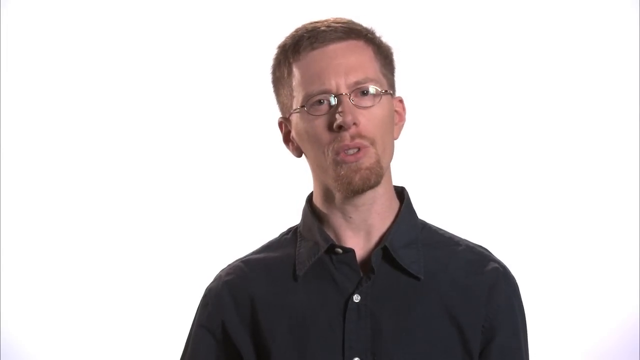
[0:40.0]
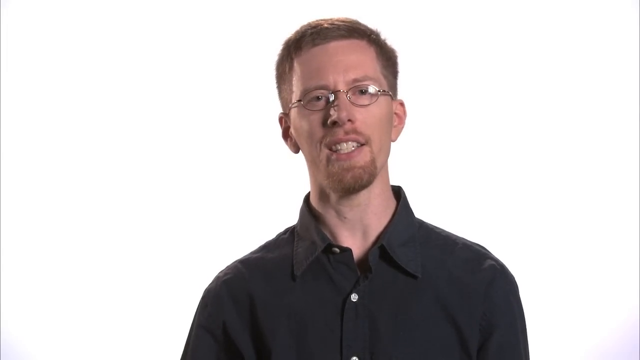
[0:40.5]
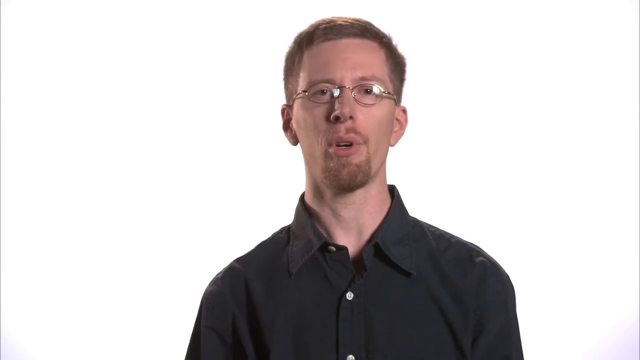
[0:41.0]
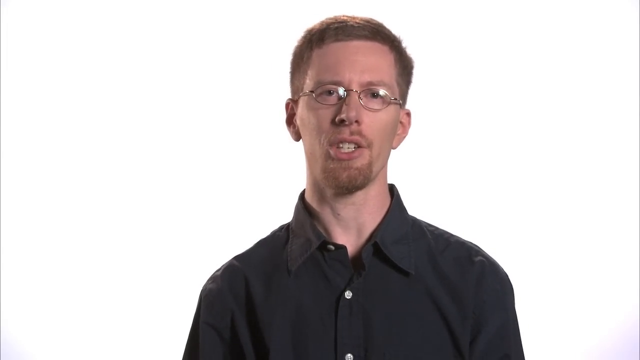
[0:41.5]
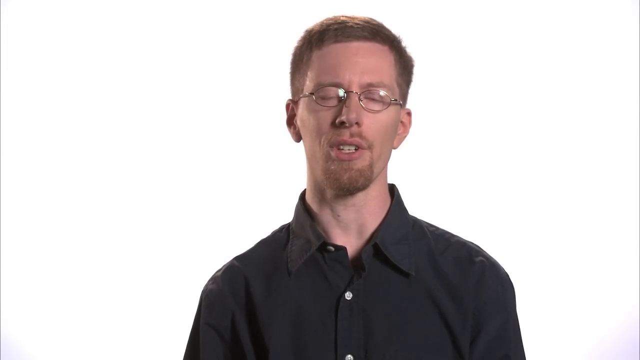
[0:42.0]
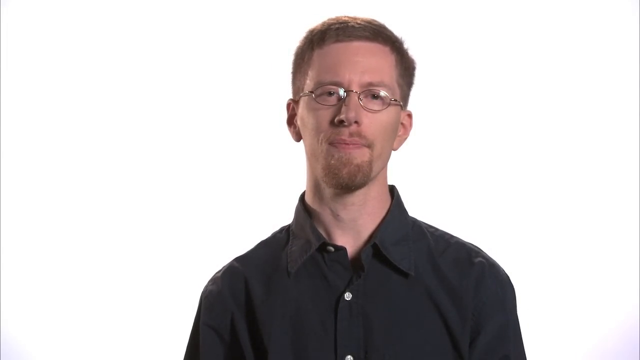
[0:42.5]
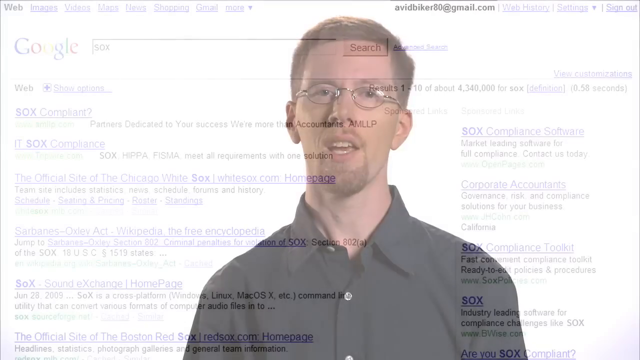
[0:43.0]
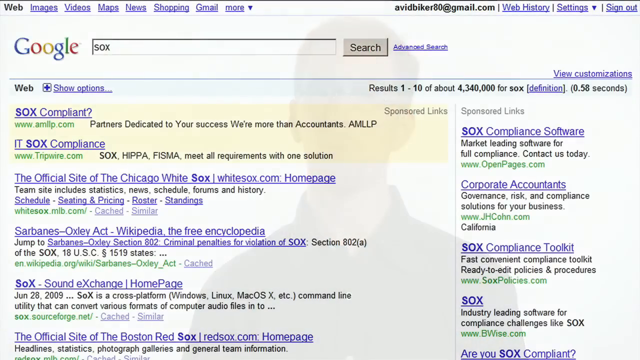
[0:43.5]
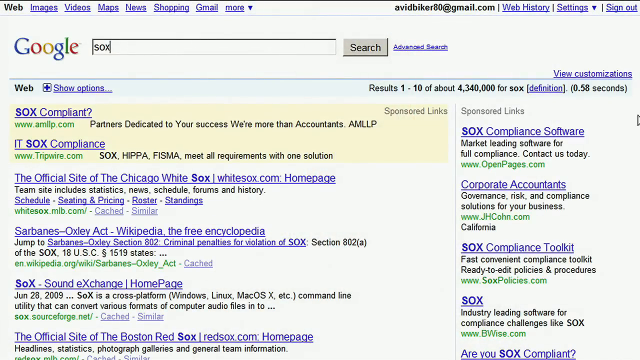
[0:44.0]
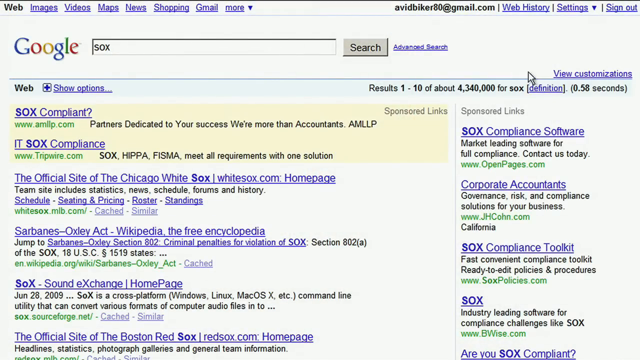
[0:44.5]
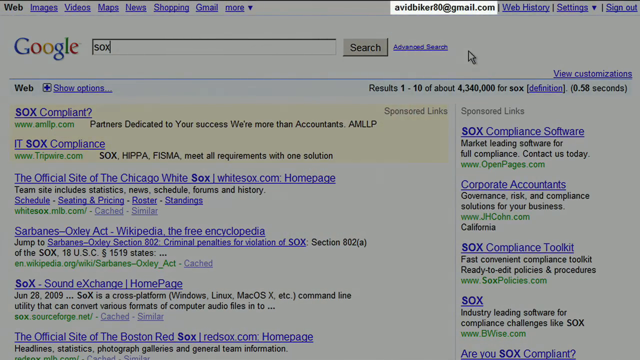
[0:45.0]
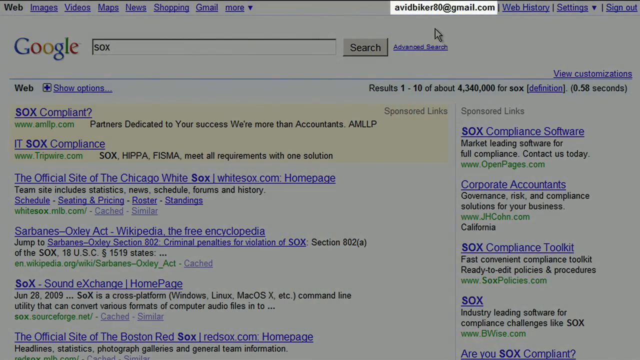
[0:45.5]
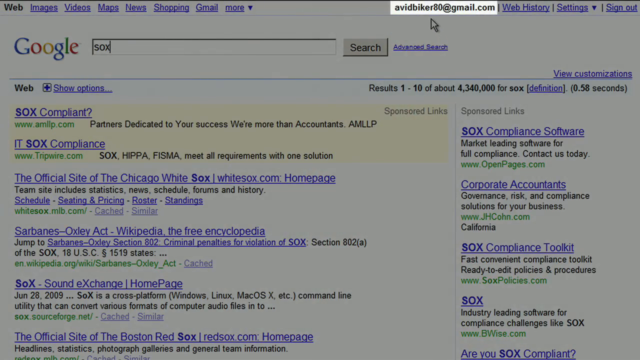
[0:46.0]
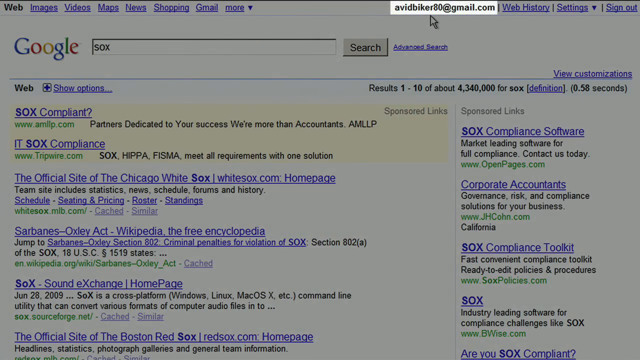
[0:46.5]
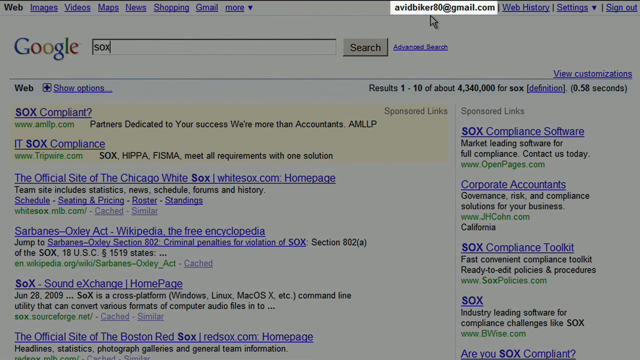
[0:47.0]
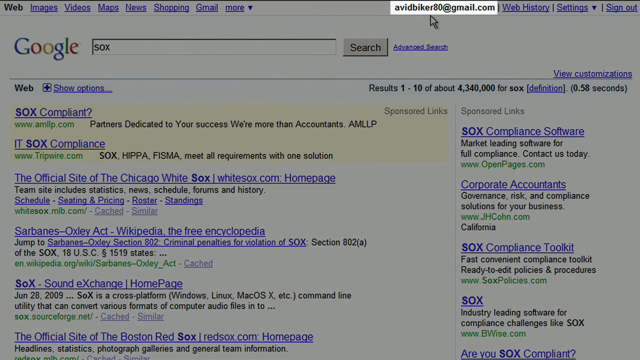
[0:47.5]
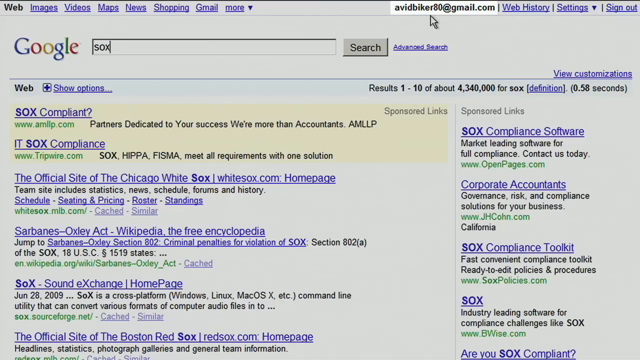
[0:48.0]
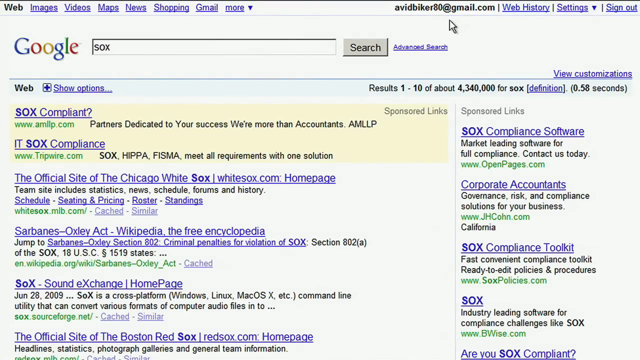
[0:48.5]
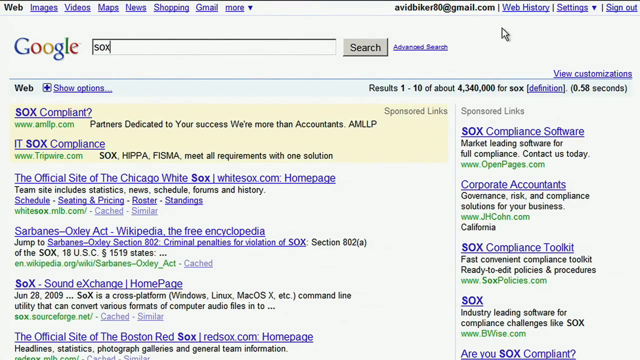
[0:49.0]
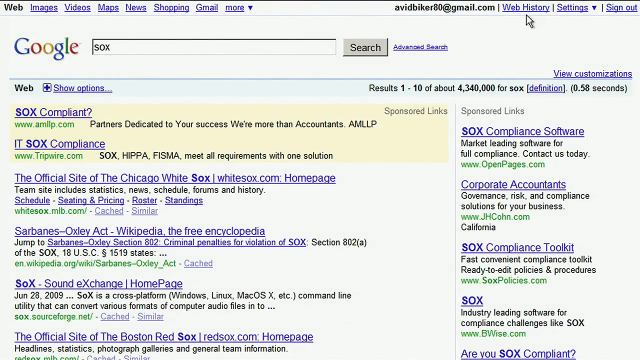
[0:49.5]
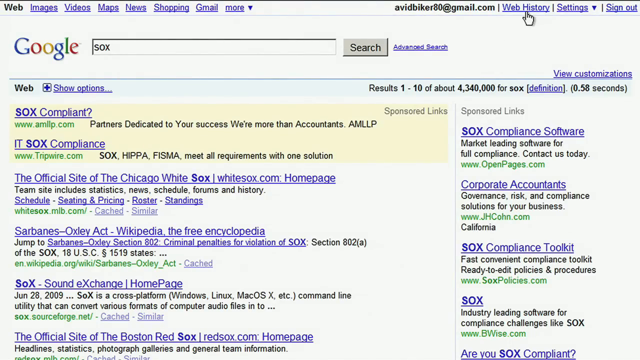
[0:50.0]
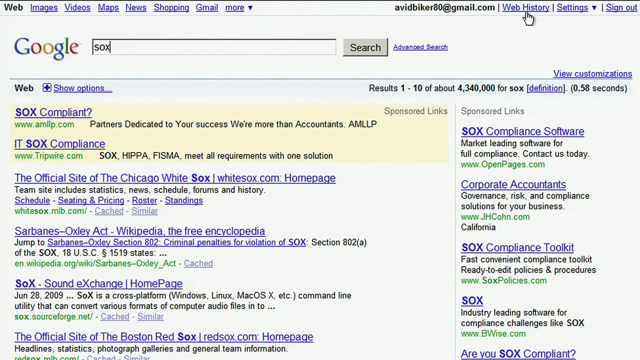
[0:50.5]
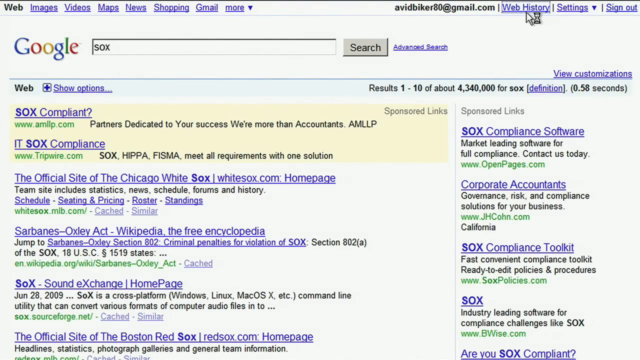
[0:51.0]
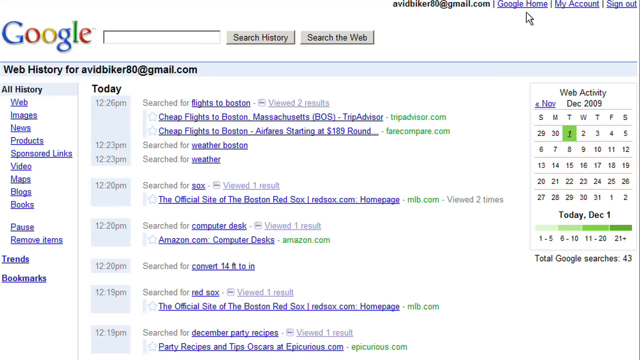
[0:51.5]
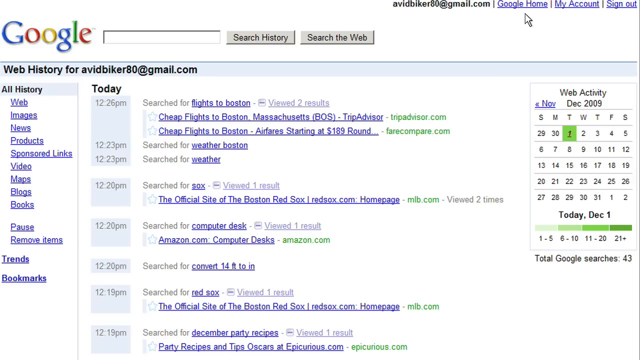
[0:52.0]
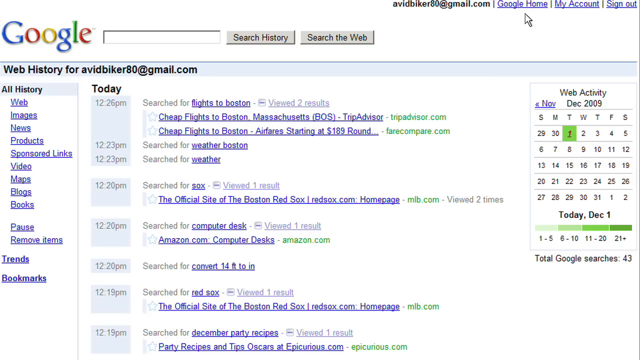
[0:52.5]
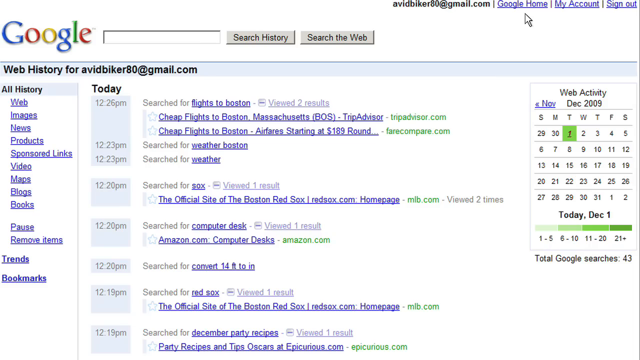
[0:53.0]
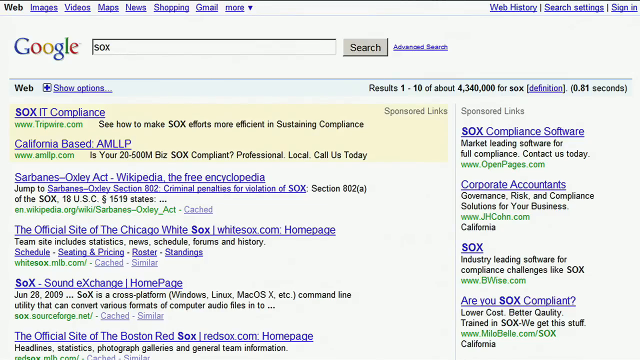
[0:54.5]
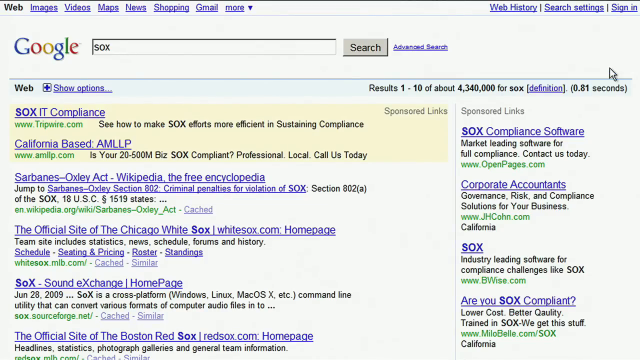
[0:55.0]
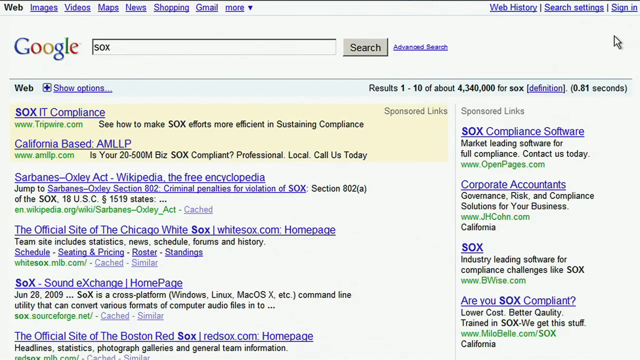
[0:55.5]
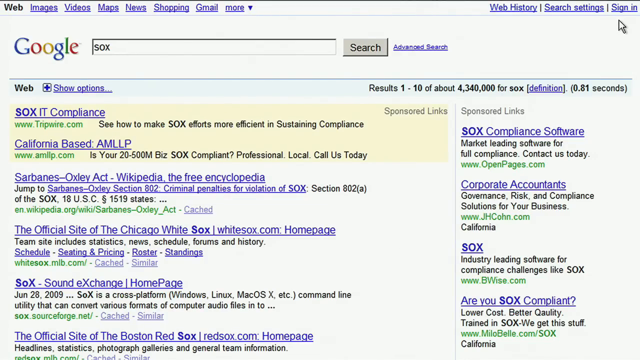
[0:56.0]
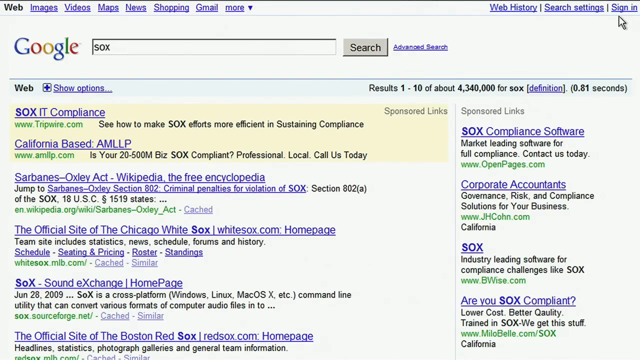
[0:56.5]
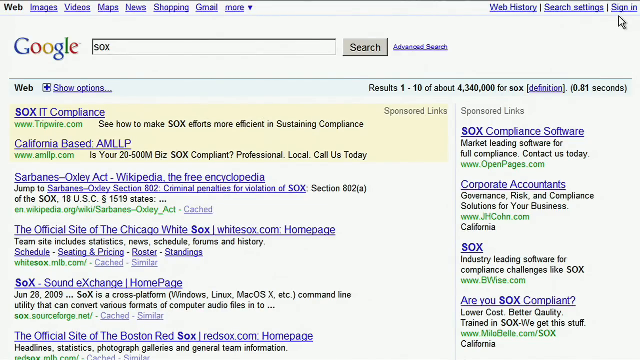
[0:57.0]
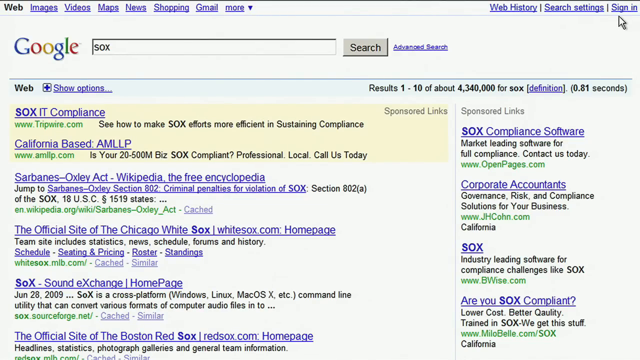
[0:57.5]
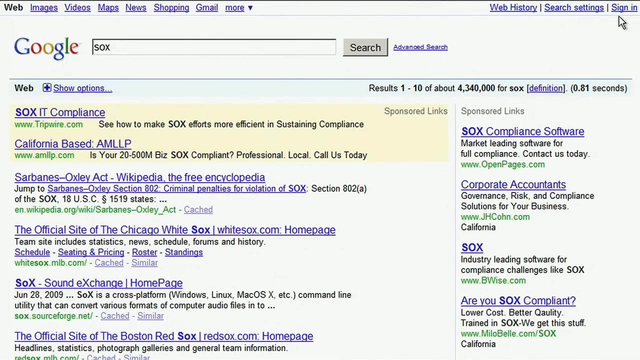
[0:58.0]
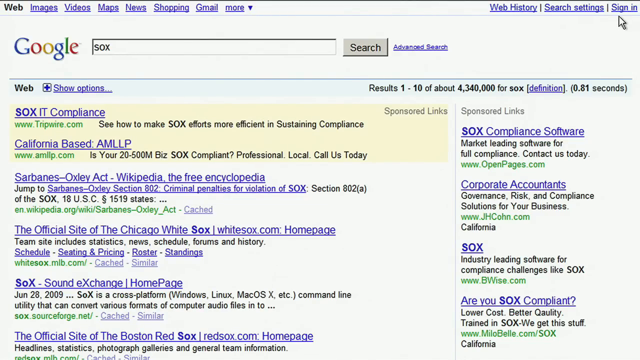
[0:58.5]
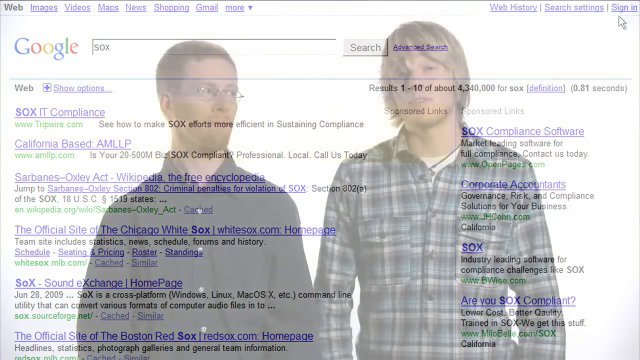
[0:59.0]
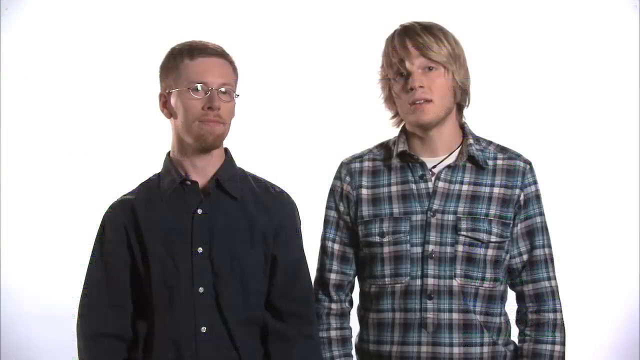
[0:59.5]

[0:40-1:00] In a close-up, Brian's head is tilted slightly to the right and his brow is furrowed. A little reflection of light is visible in his oval-shaped wire glasses, and he has a fairly tall neck. He fades out, and a search window opens with the word "SOX" in the search bar. The cursor, in the upper right corner, slides up to the top and points to an email address, which is highlighted in white while the rest of the screen is shaded out. Then the gray vanishes and the whole screen is white again. The cursor moves to the right of the email to "Web History" and clicks on it, turning into a hand icon. An hourglass appears, and a different window opens reading "Web History" for that email account. A calendar is on the right side, in the middle is what looks like a planner labeled "today" with various items arranged along a timeline, and a menu is in the far left corner. The video cuts back to the search results for "SOX", the cursor slides up to "sign in", and then Brian and Robbie appear on screen.